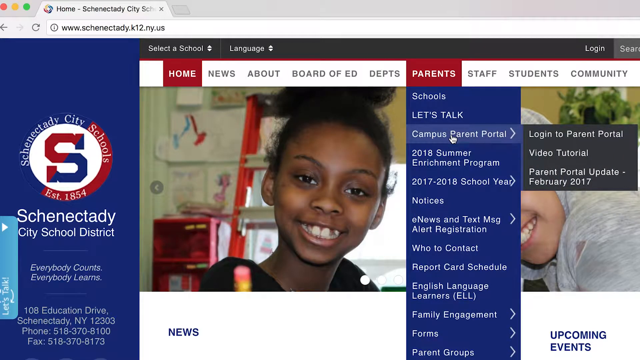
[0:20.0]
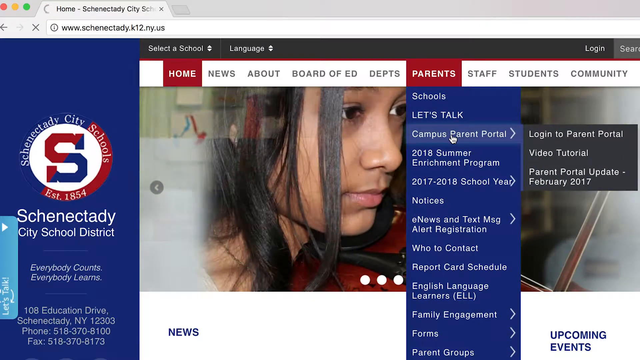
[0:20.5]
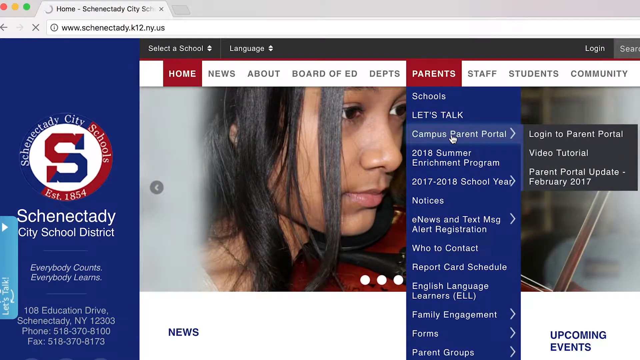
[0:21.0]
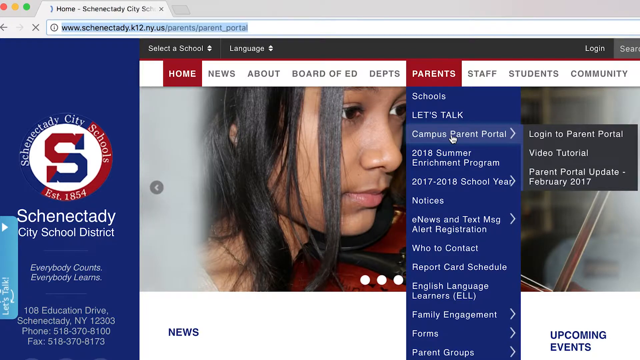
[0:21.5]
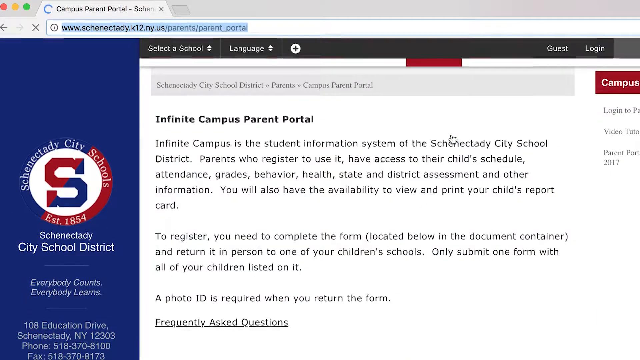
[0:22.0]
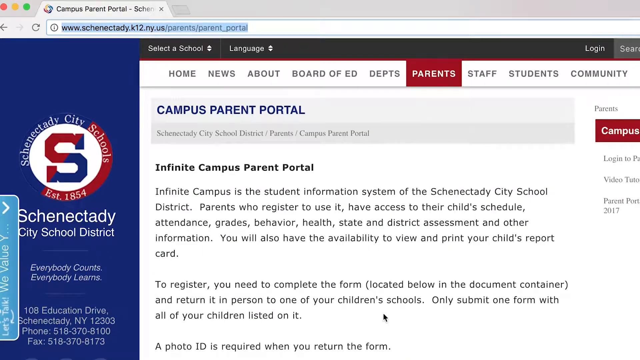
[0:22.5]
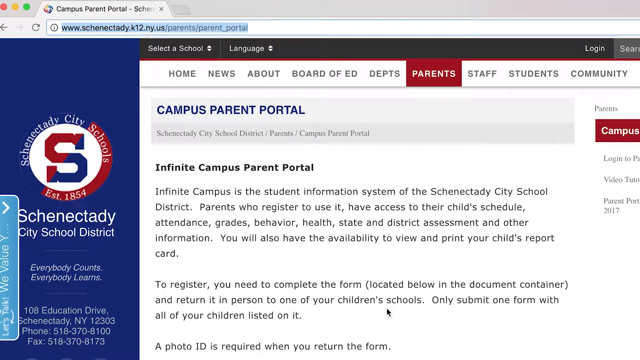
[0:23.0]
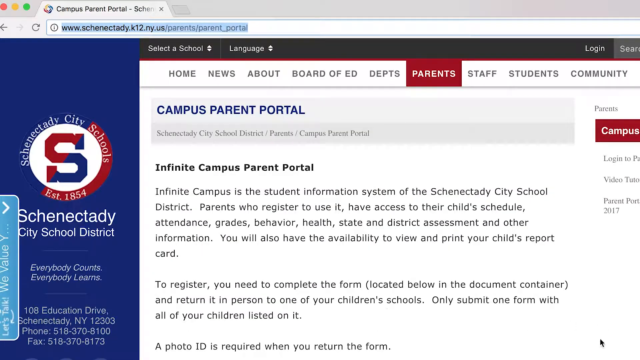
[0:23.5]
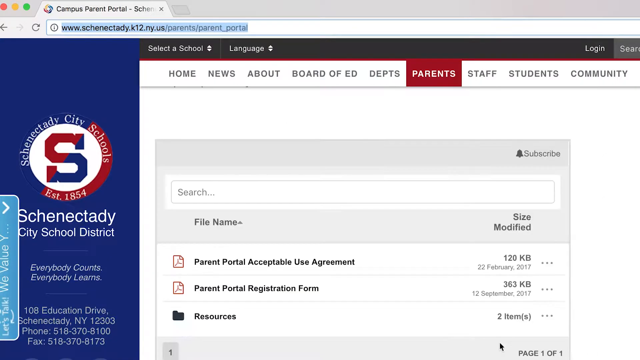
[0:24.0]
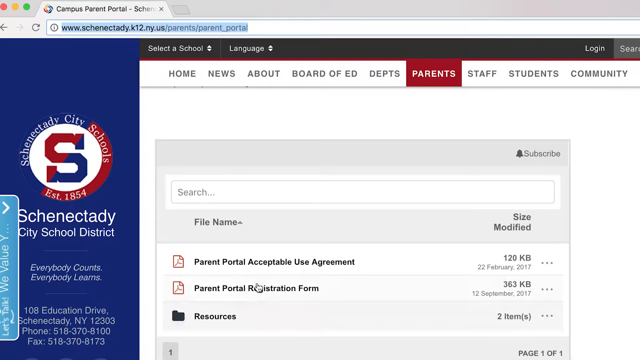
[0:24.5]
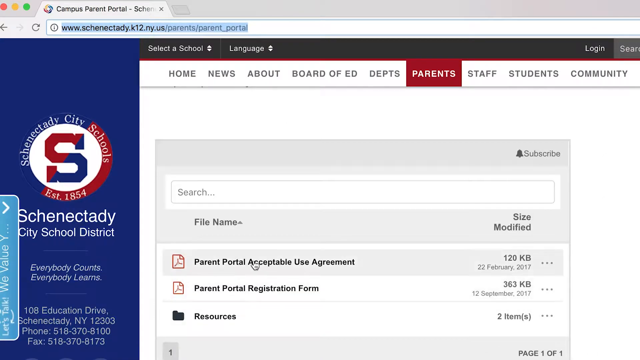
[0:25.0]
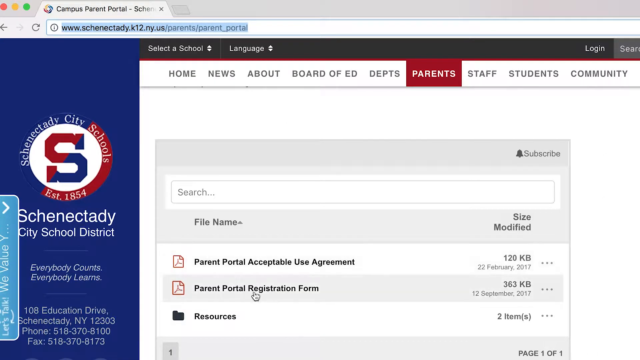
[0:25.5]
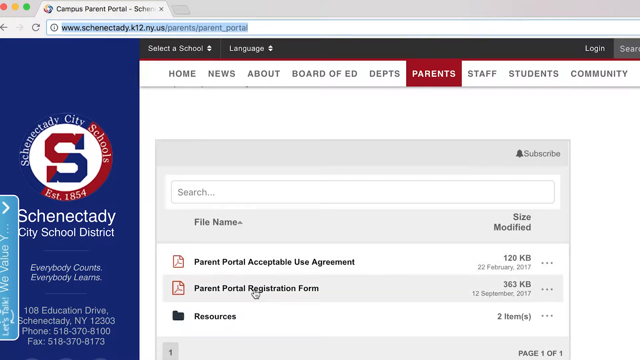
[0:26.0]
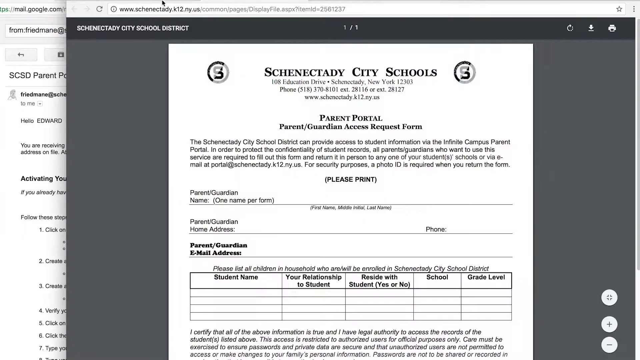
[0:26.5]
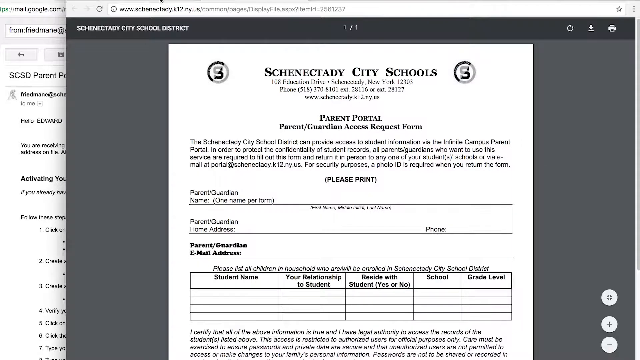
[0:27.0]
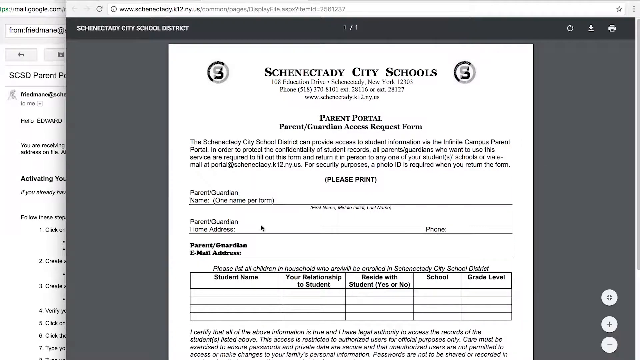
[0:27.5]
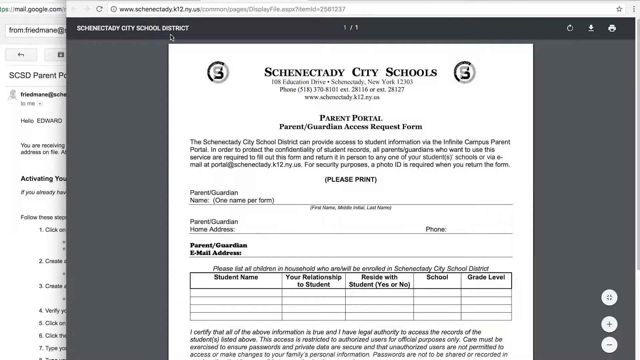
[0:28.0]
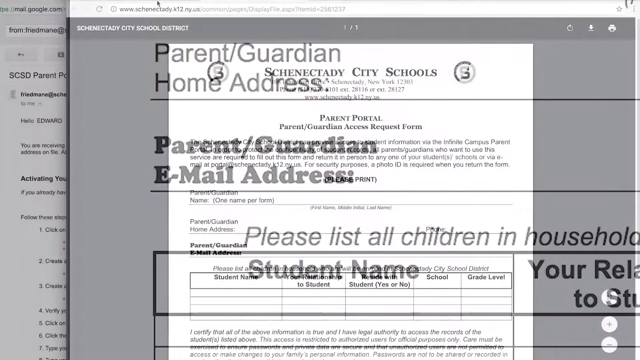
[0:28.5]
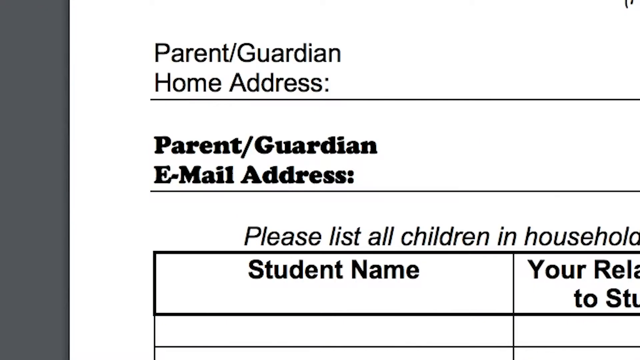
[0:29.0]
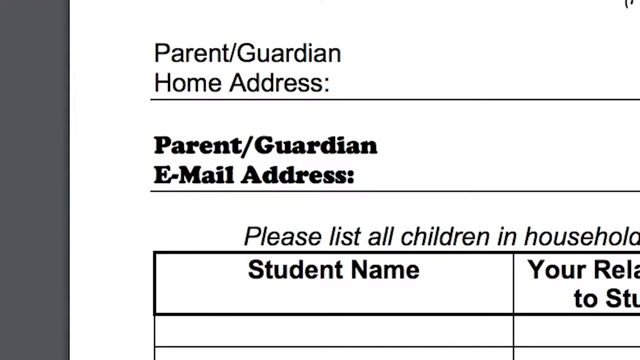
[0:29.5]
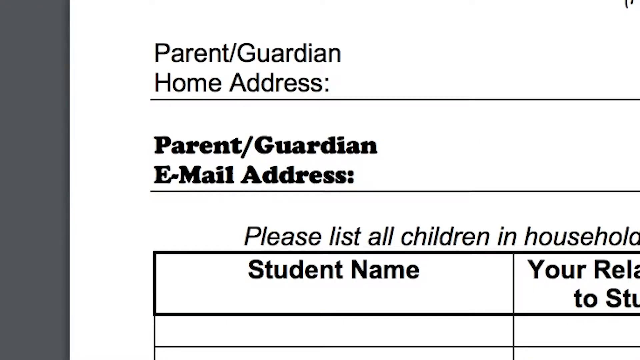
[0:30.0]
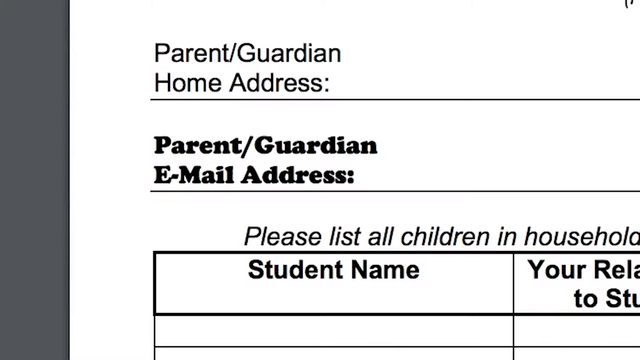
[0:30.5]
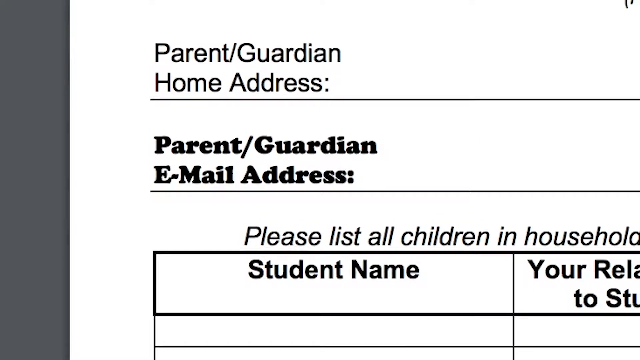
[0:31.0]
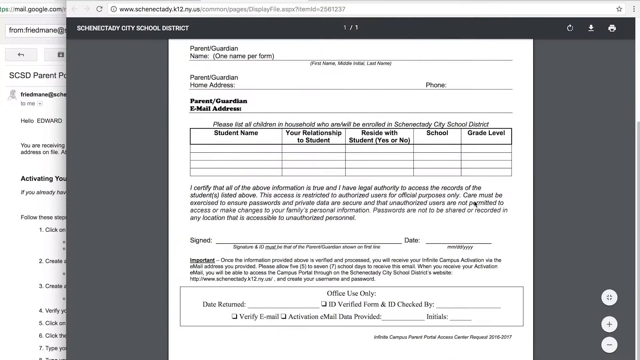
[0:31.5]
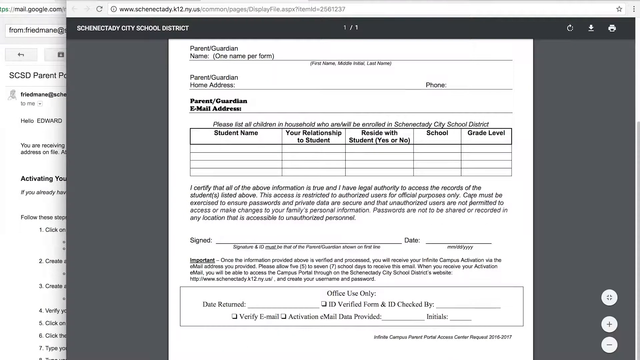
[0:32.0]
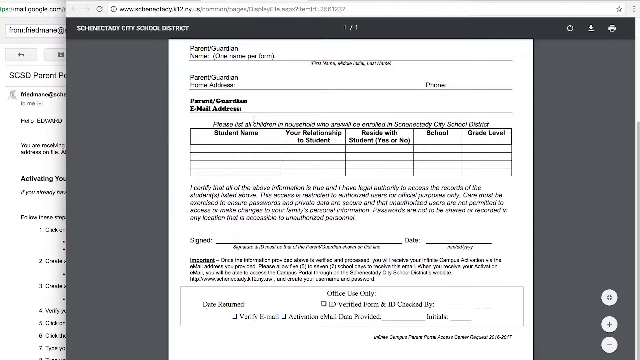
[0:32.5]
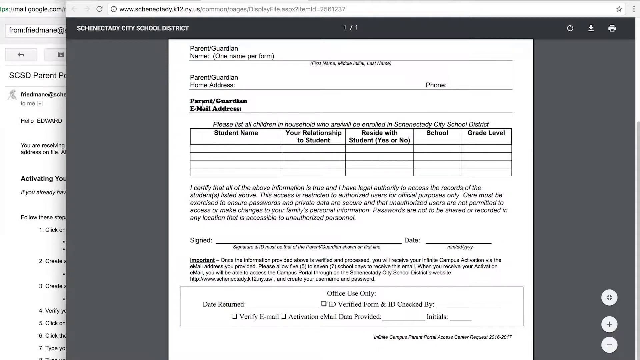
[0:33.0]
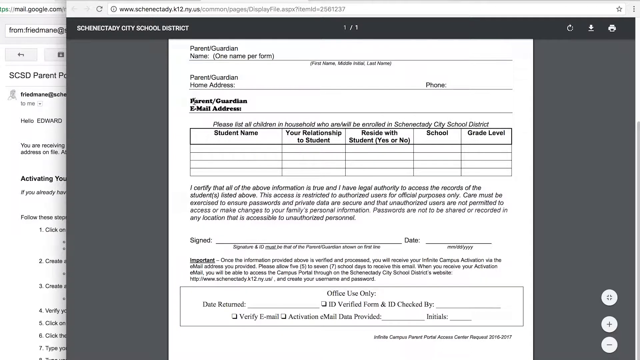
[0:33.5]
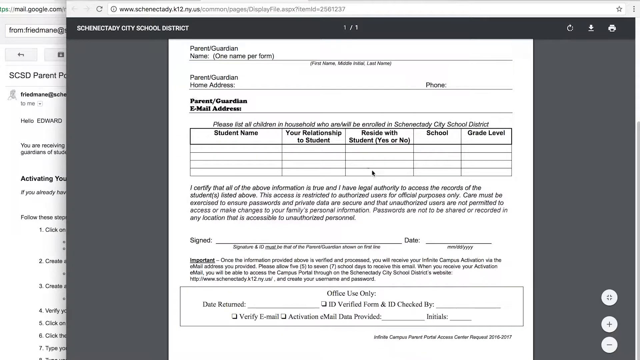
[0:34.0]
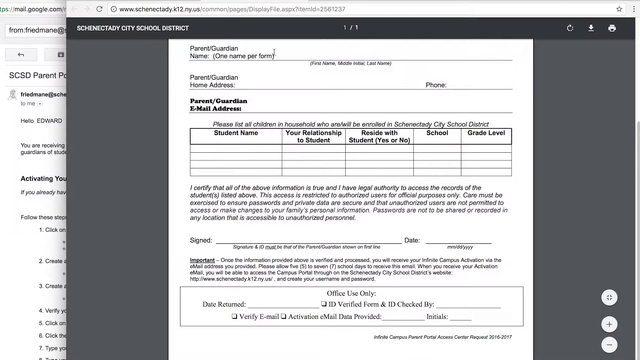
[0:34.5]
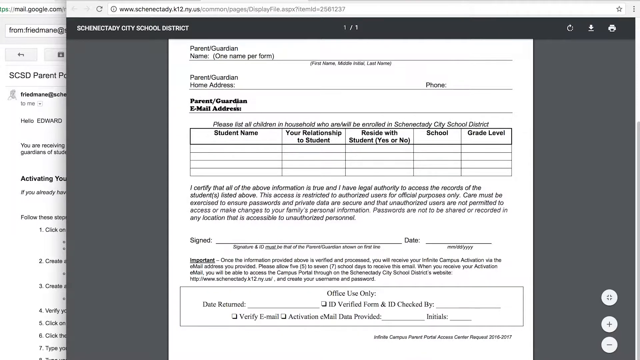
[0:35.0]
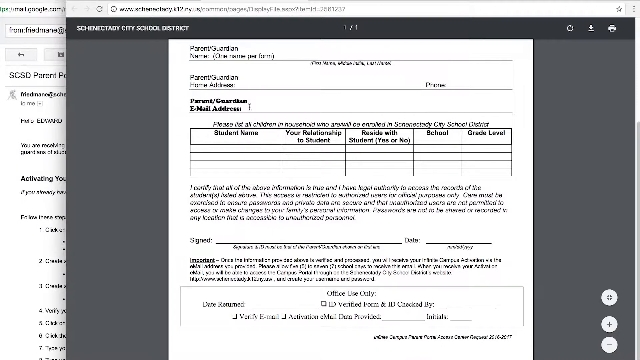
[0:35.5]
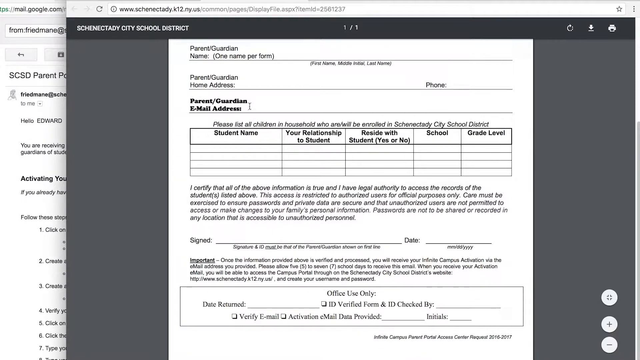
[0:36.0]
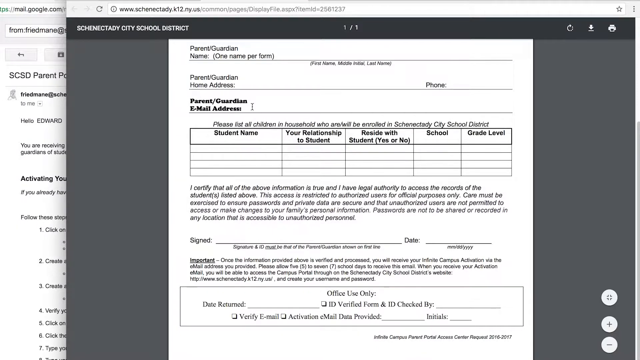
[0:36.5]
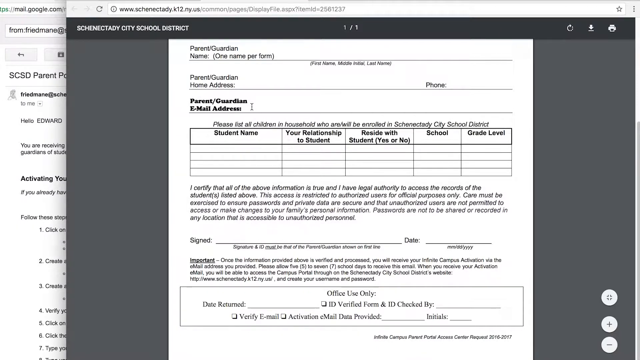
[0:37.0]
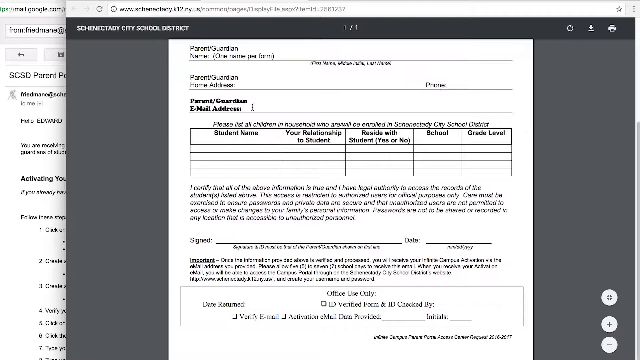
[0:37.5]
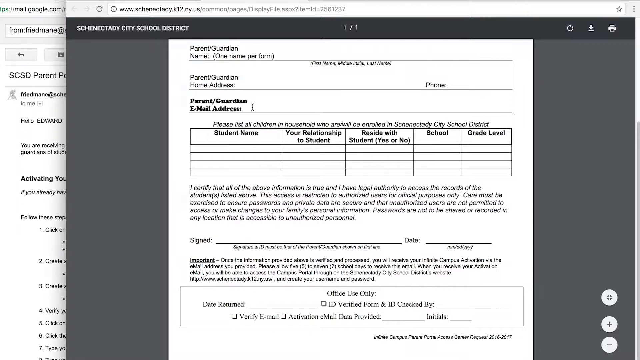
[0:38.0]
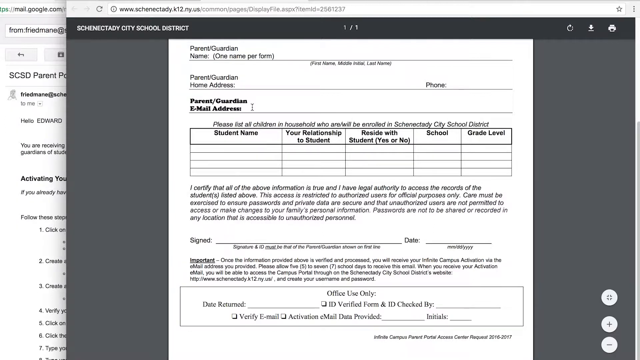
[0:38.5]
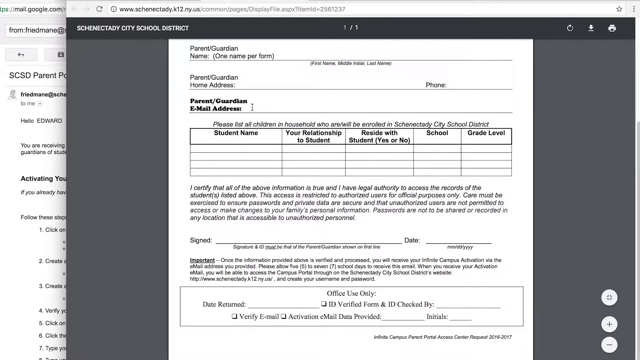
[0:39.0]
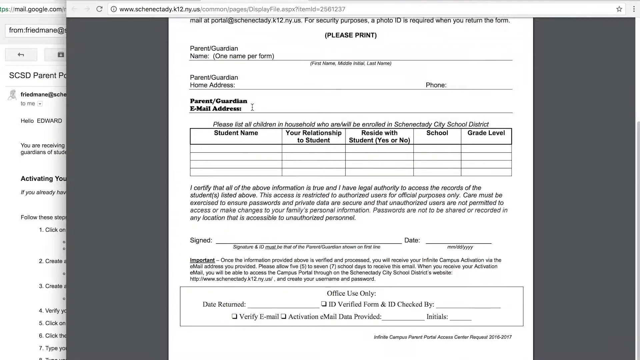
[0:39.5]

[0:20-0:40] A web page is on screen, apparently with a tab at the top. At the bottom is a picture of a little black girl looking at the camera, her body facing toward the right, seen from the shoulders up. Her hair is up, she is smiling, and she has two big front teeth and some crooked front teeth on the top. To the right of that, a blue bar runs down the screen with white lettering listing "let's talk," then "portal," which has the mouse pointer on it, then "2018 summer enrichment program," "2017 to 2018 school year," "notices," "e-news and text message registration," "who can contact," "report card schedule," "English language learners," "family engagement" and "forums." To the right of this is a picture of another kid with half of his face cut off, kind of leaned over toward the left side of the screen; his chin, part of his mouth and his left cheek are visible. Above him, in black and white letters, it reads "log in parent portal," then "video tutorial," then "parent portal update, February 2017." The view switches to a picture of another girl, then goes back to the page with the parent portal. The mouse pointer scrolls down and clicks on something. The view zooms out on a sheet that reads "parents/guardian" at the top, then zooms out on the sheet where it reads "parents/guardian email address."